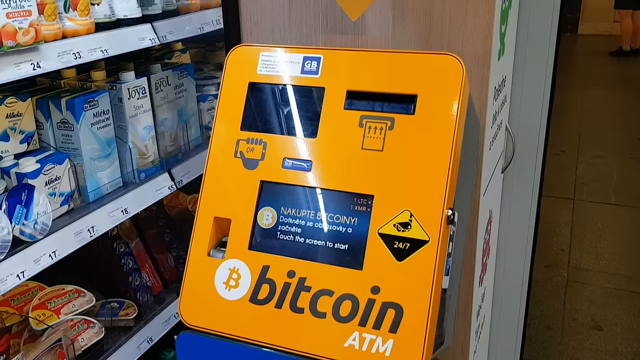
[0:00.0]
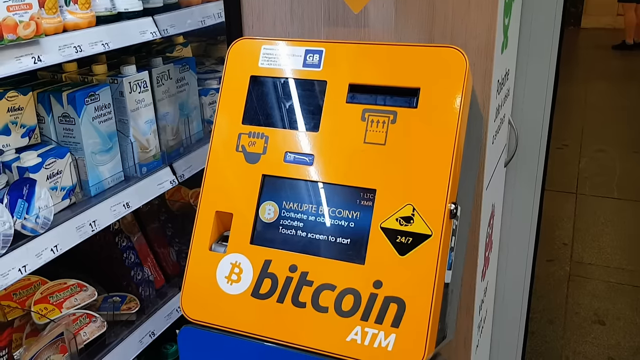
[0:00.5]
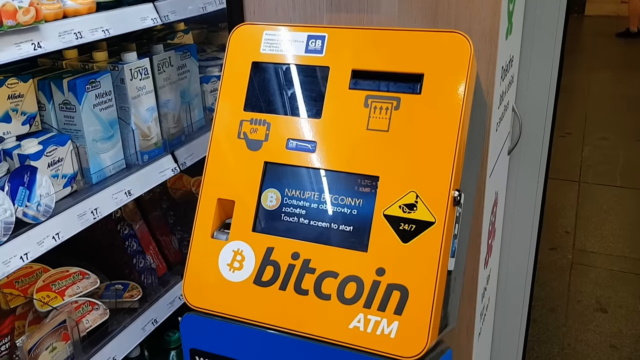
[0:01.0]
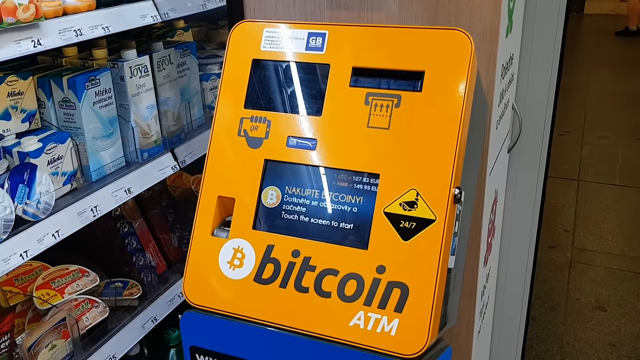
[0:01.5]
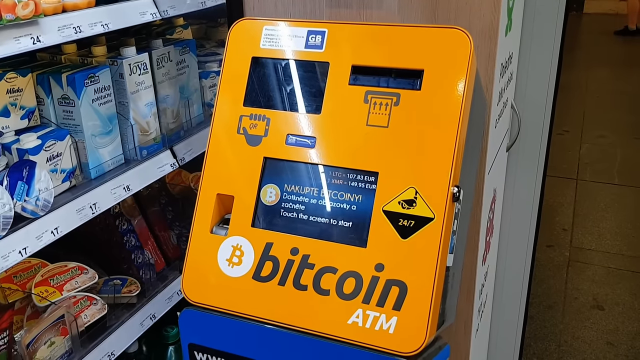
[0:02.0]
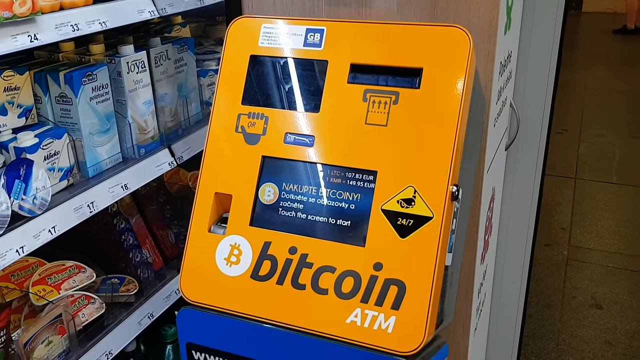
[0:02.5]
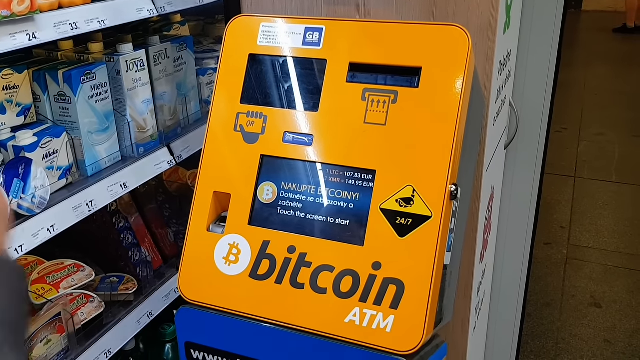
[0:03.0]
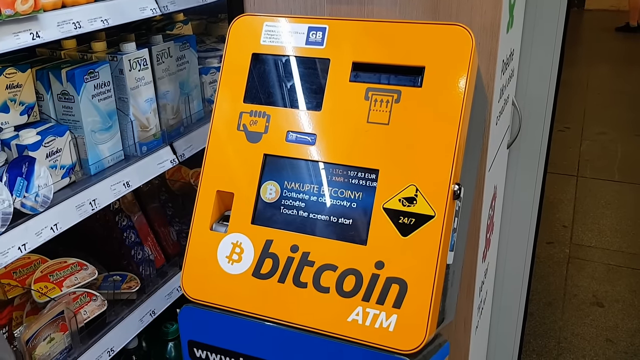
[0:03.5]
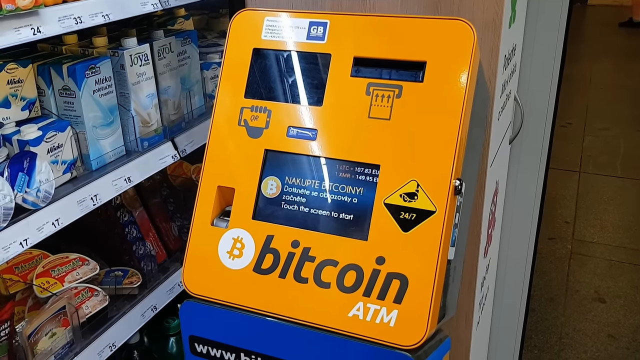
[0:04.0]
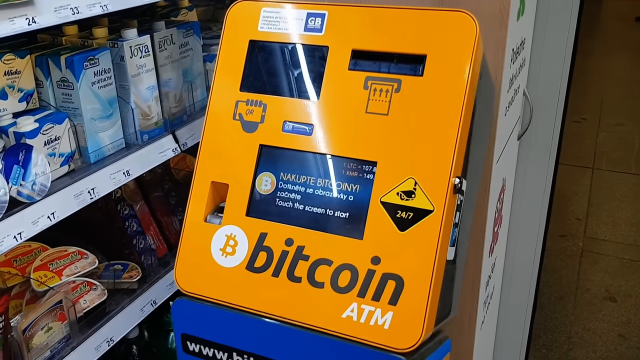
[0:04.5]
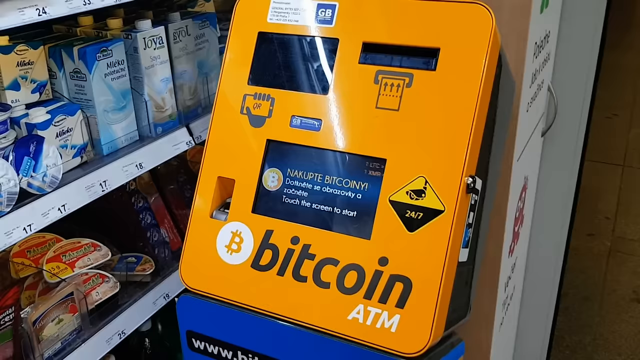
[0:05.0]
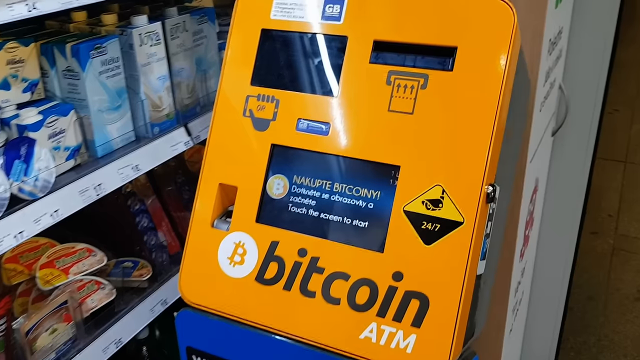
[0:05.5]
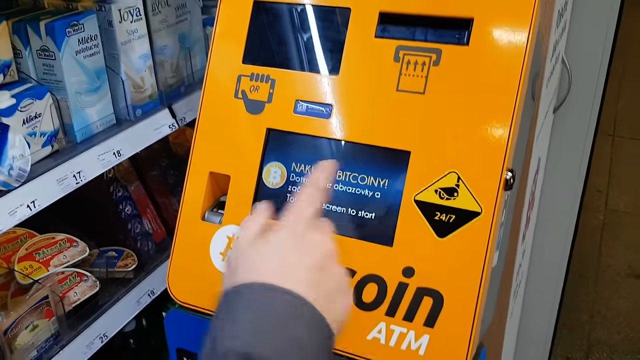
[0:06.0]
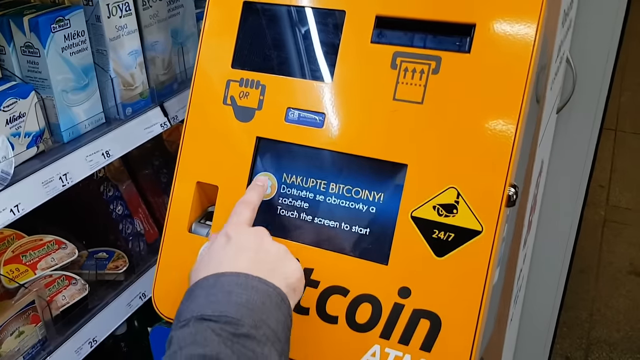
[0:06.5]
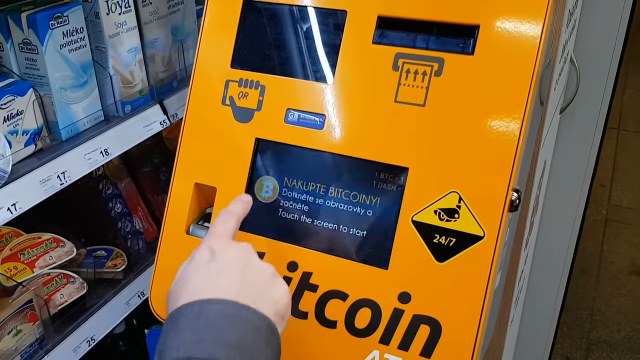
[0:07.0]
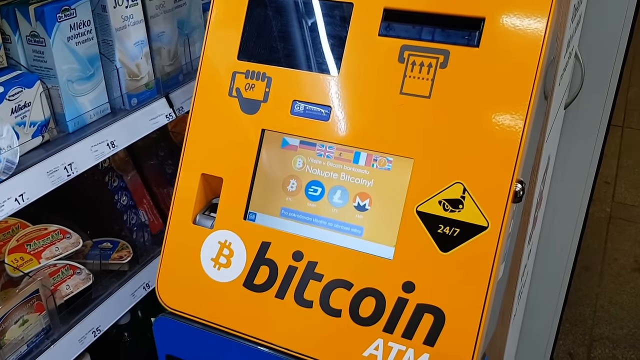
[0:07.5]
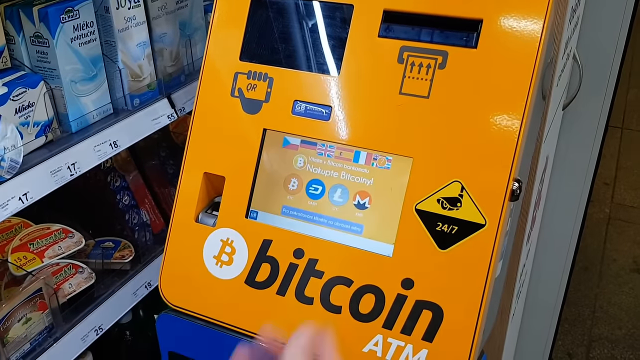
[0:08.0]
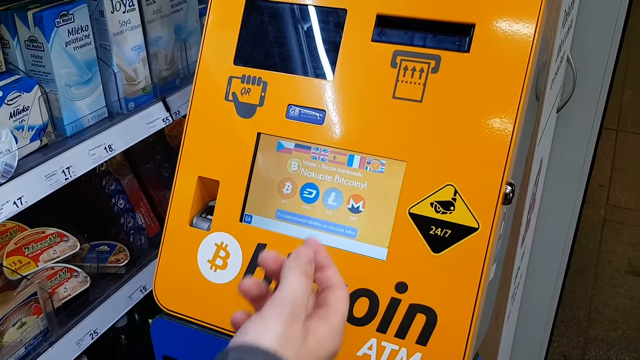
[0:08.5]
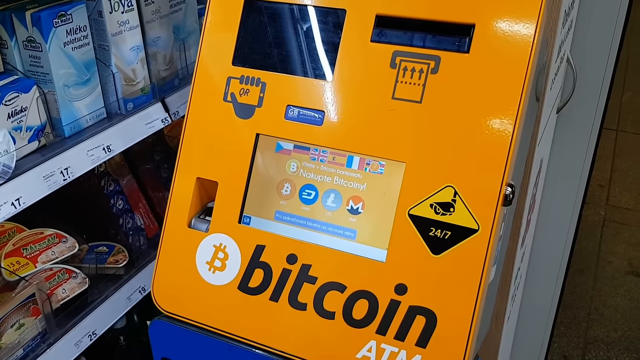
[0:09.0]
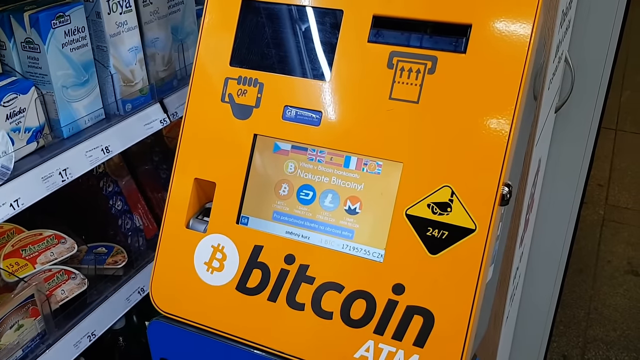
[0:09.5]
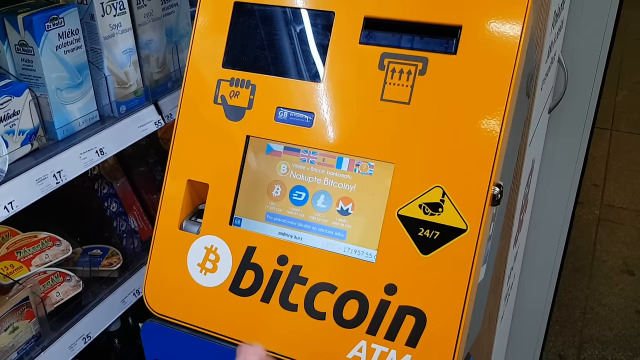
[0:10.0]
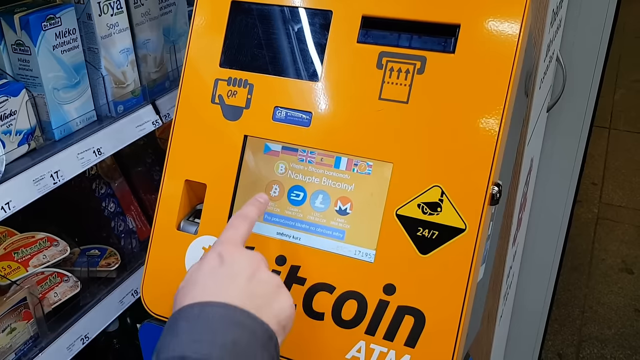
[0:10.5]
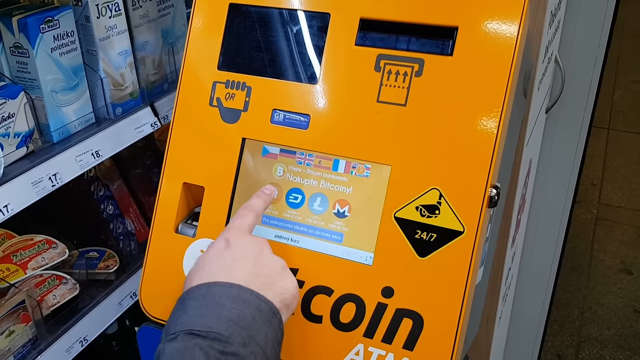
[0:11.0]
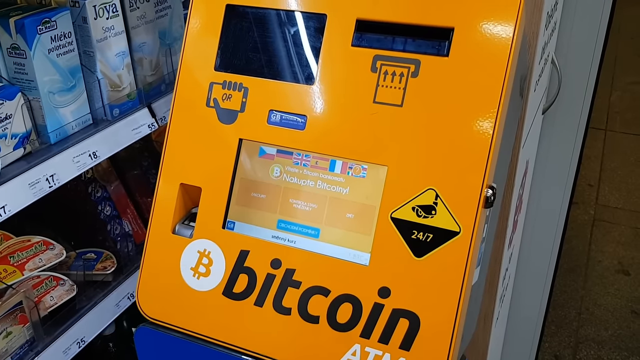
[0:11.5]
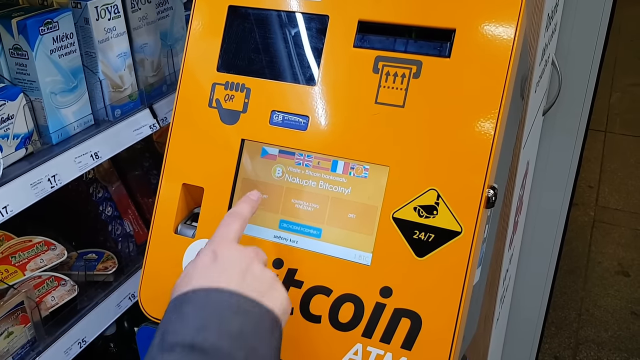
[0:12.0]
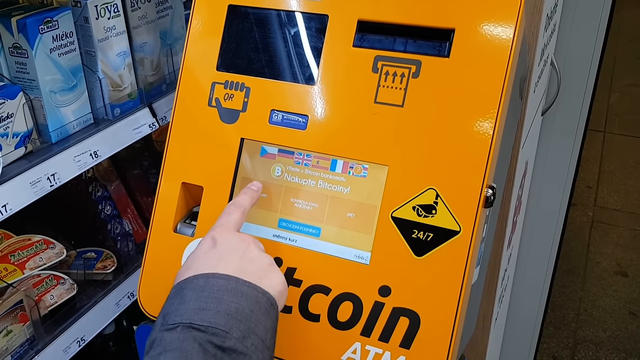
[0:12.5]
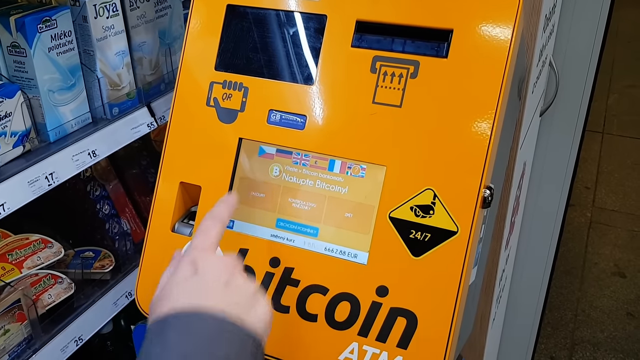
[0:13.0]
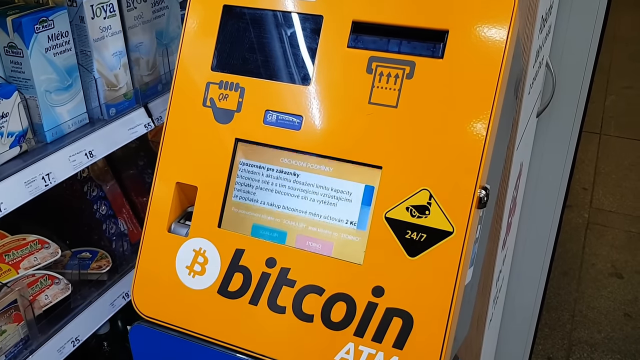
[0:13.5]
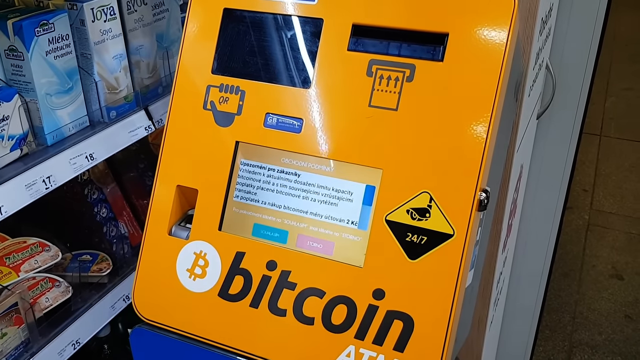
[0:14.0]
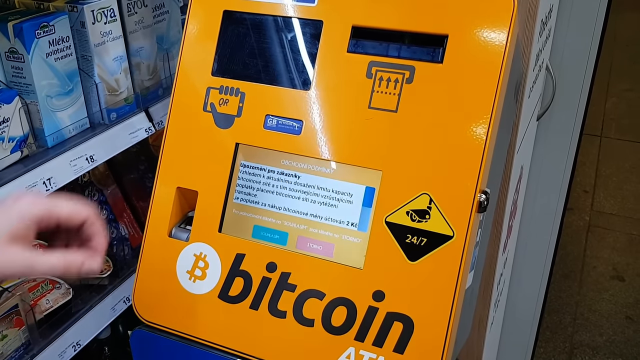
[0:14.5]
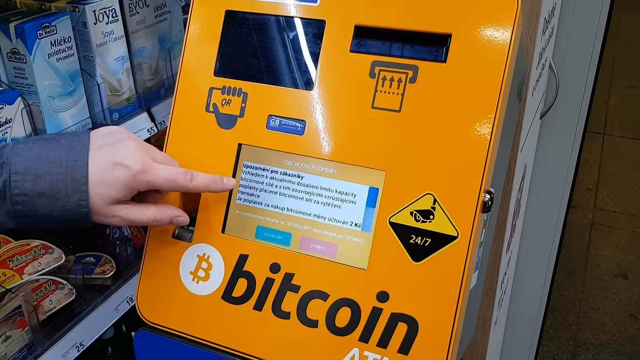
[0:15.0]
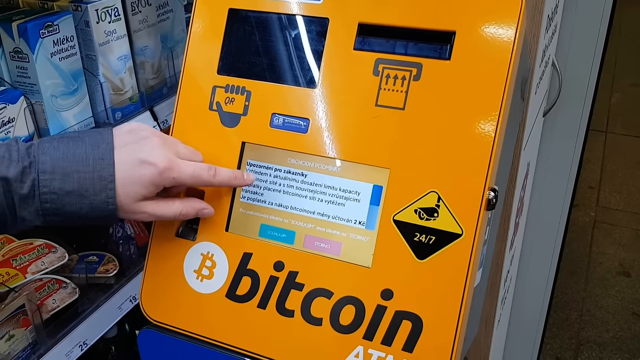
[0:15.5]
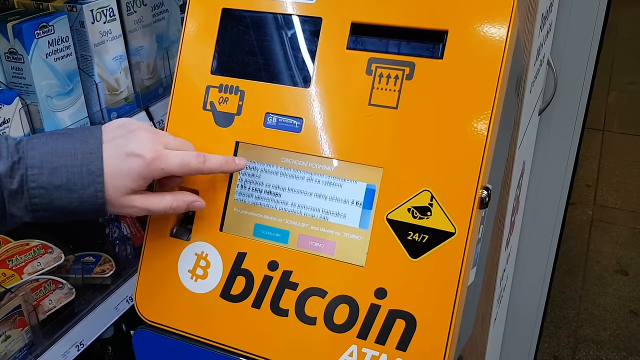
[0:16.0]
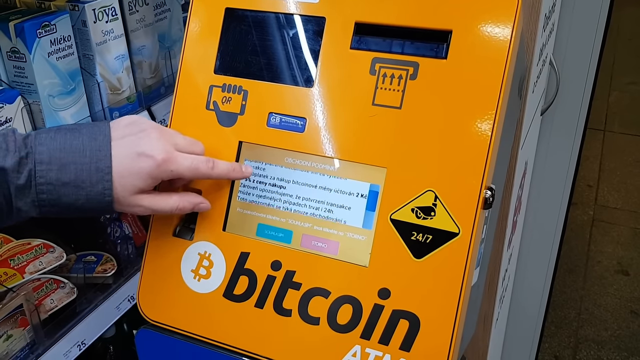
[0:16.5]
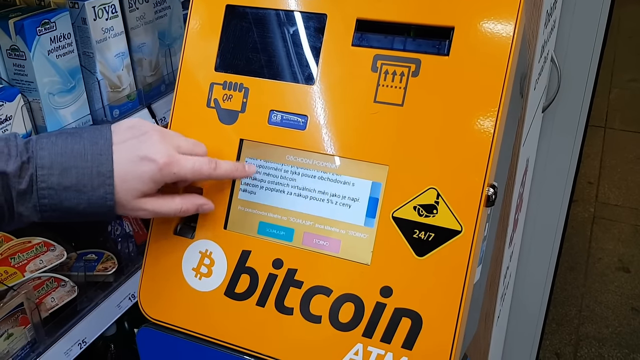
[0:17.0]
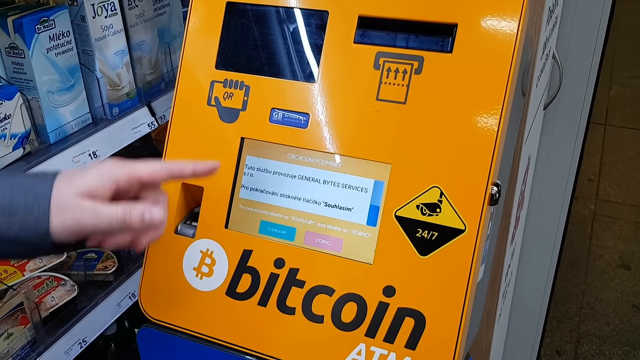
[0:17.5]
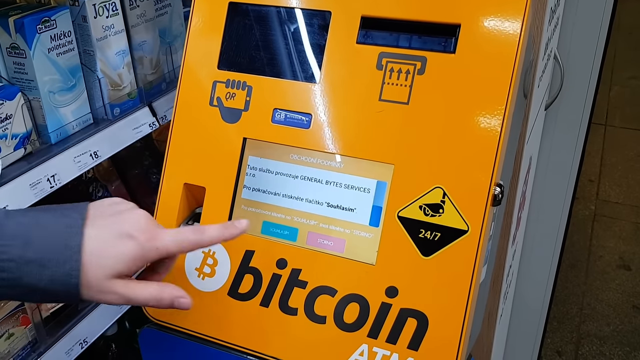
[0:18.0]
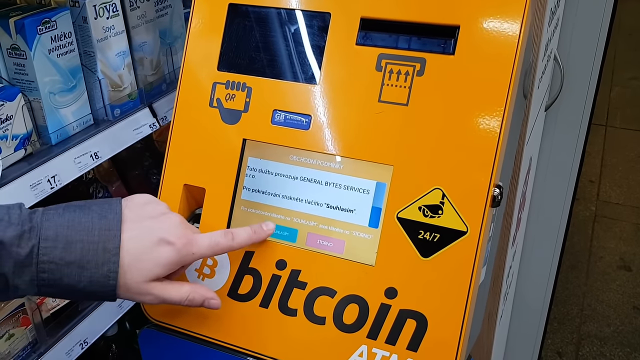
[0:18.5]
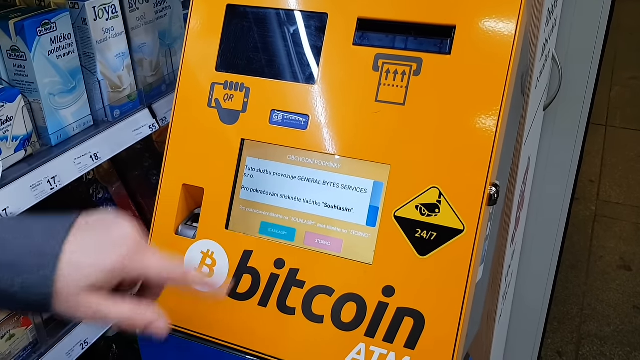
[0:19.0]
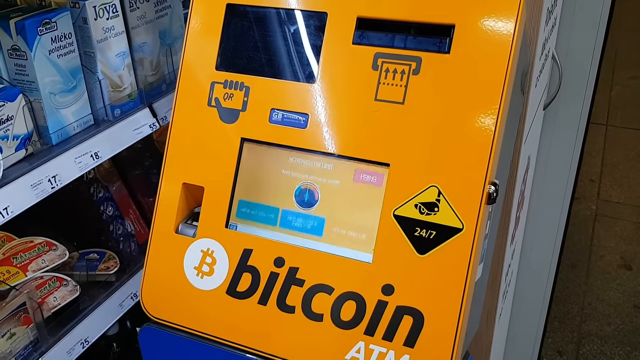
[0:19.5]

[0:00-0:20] What looks to be a Bitcoin ATM is in a store, mounted on a wall. Behind the machine, there appear to be milk-substitute-type options on the shelf. The machine is yellow and clearly labeled "Bitcoin" at the bottom. It has a digital screen in the middle, a slot to put in a card or a scanner for a phone, and a sticker on the right-hand side indicating that it is under surveillance 24-7. The screen shows a reflection of the camera person and the user. The user raises a hand and presses the touch screen with an index finger, makes a Bitcoin selection, selects a button, scrolls through the terms and conditions, and clicks a green button indicating accept.